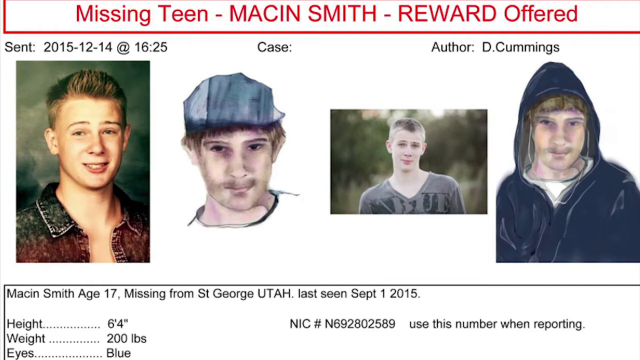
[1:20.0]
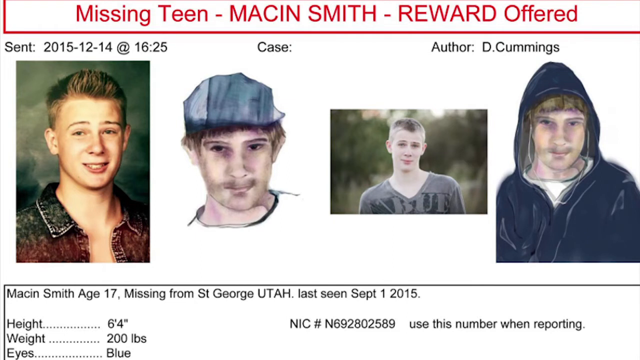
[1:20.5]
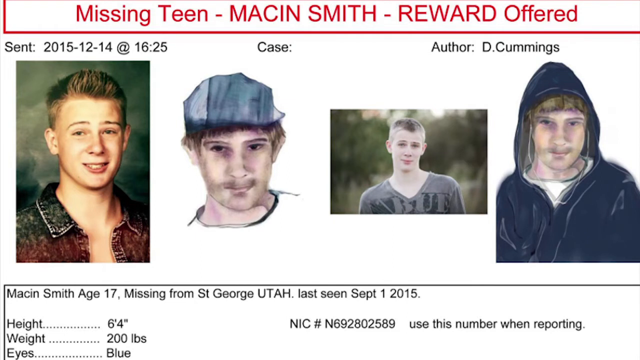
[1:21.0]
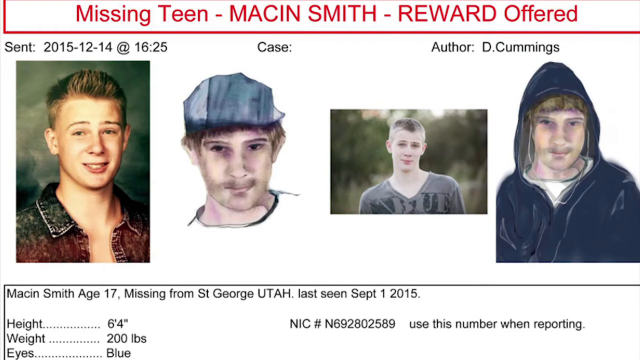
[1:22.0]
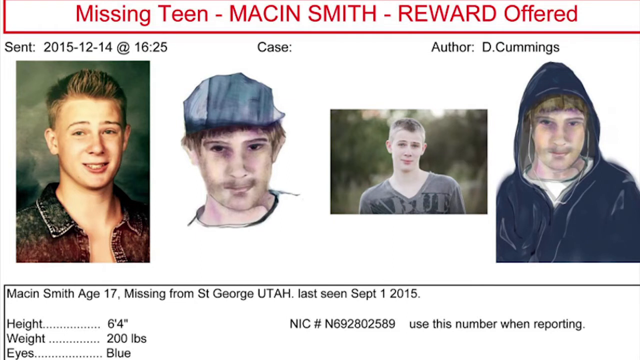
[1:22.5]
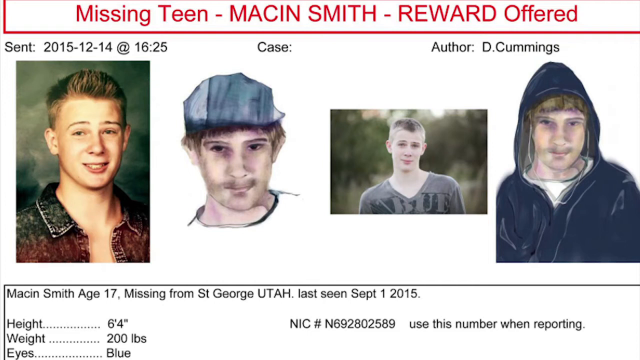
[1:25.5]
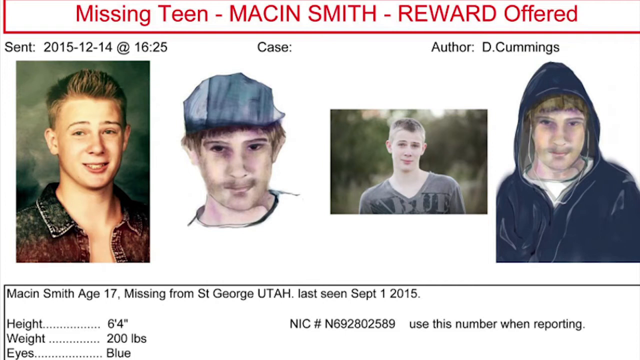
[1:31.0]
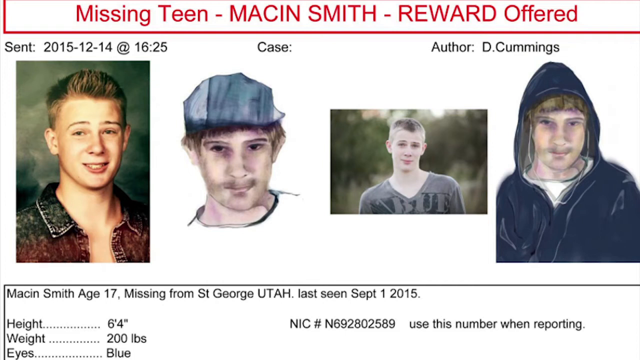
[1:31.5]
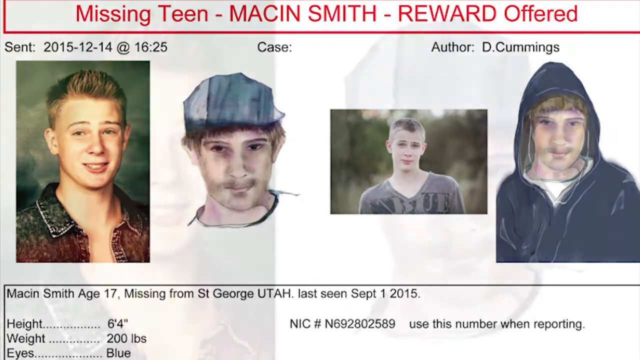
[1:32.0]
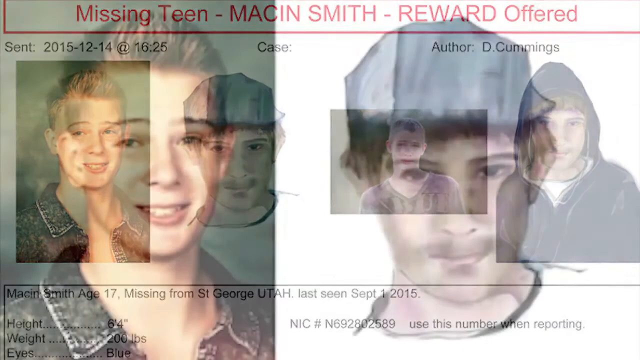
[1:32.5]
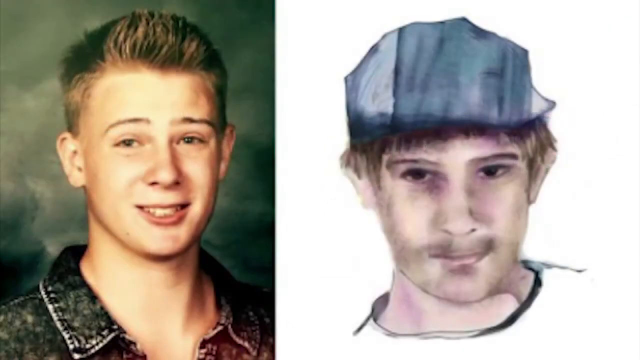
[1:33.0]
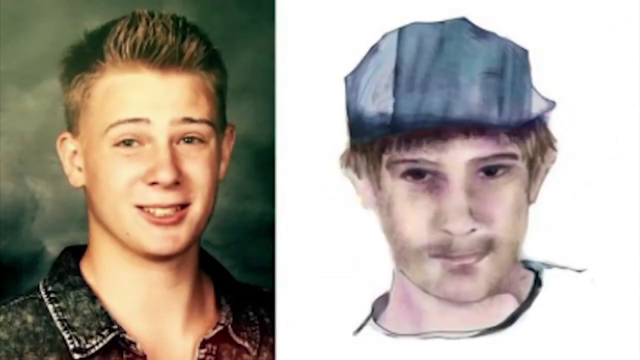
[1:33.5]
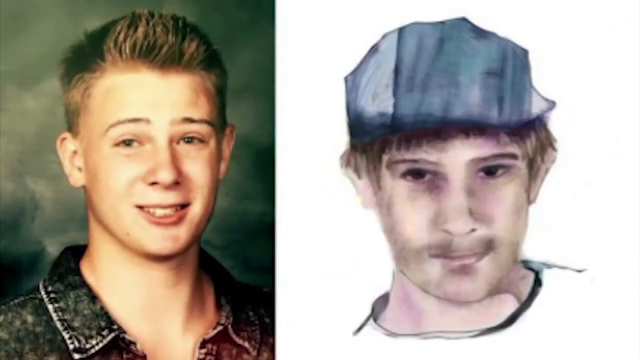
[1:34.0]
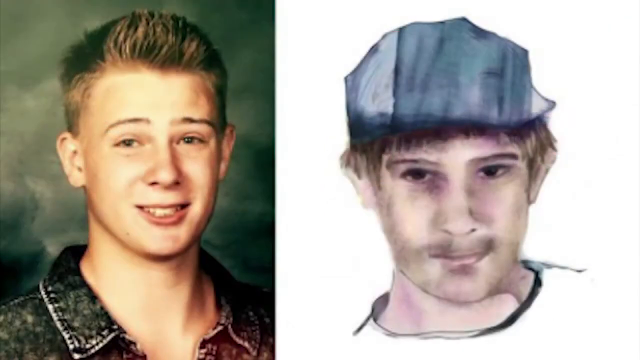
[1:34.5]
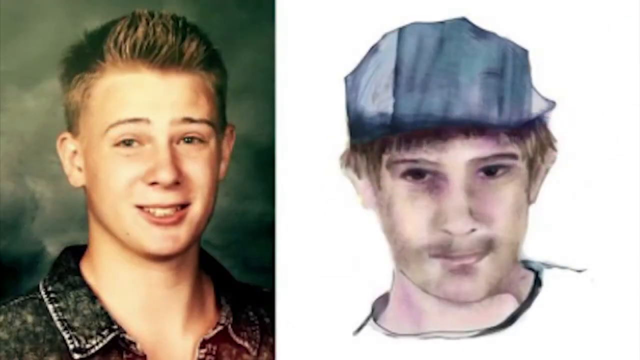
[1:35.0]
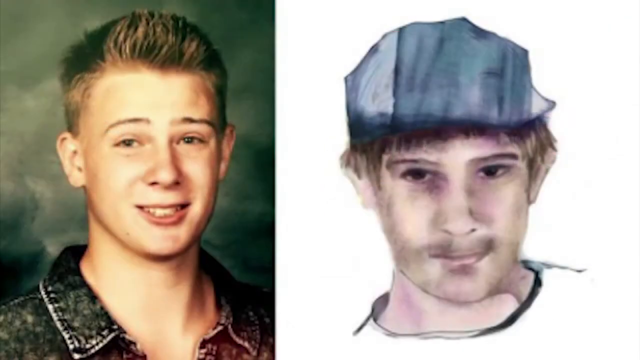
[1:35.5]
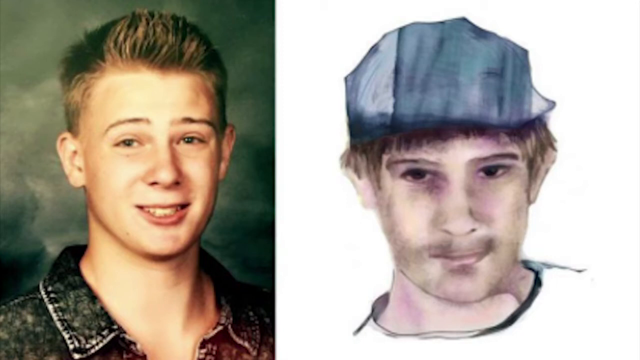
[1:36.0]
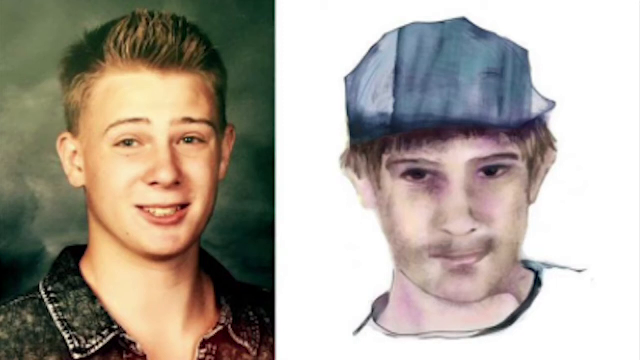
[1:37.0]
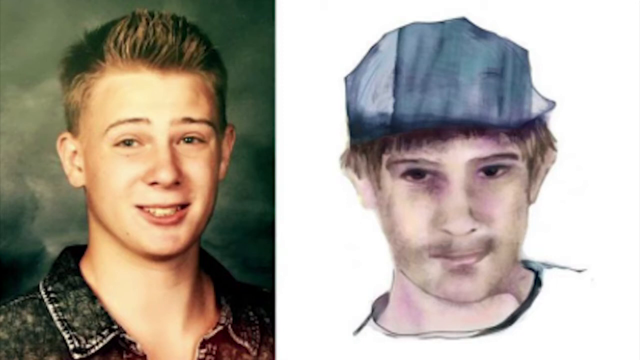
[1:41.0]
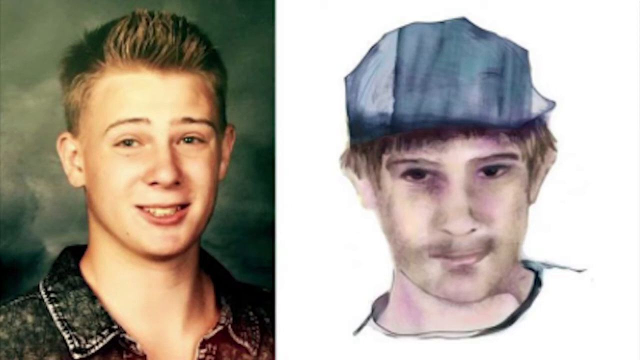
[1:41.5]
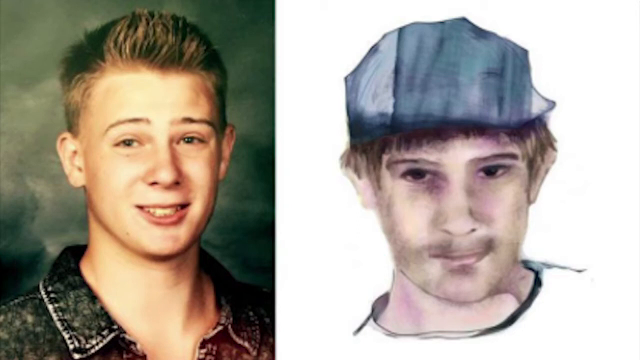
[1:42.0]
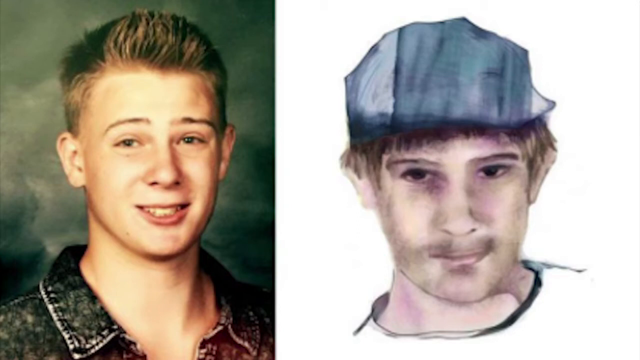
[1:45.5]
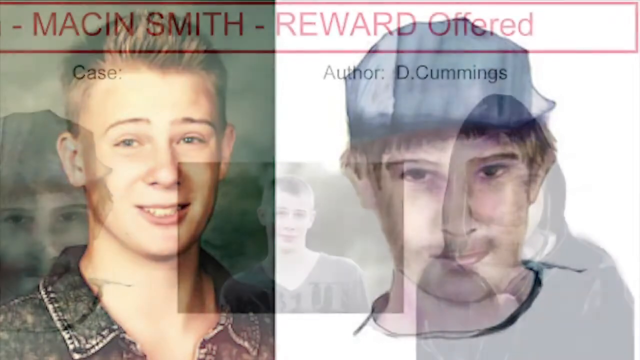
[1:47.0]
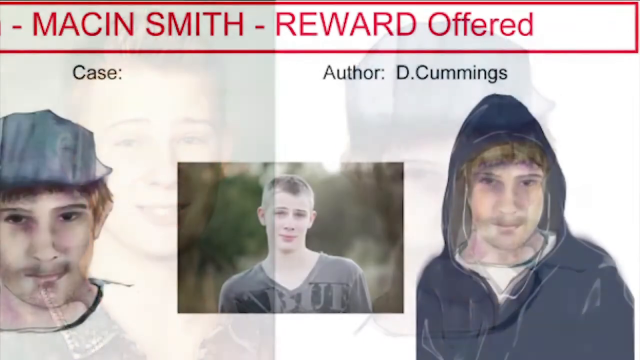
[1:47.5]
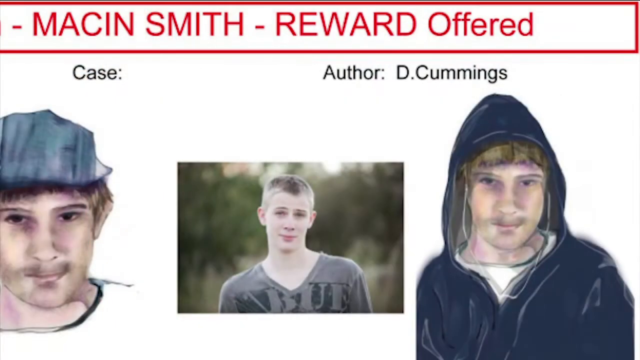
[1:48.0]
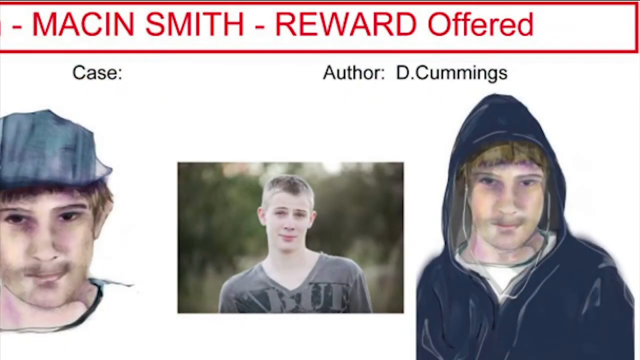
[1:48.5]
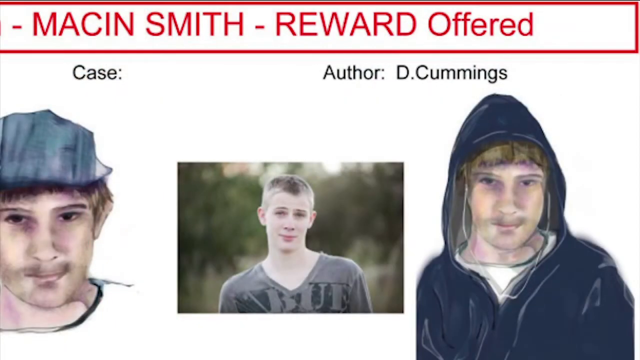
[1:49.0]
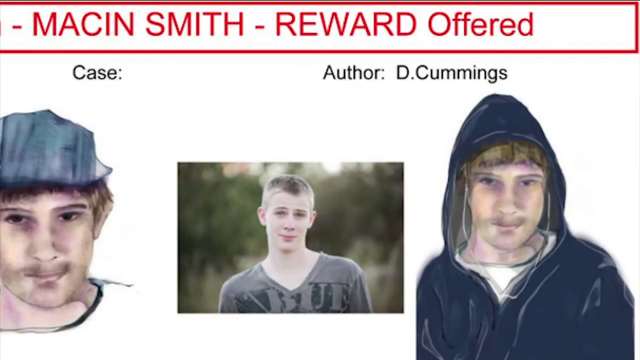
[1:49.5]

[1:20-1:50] The missing poster for Macin Smith, spelled M-A-C-I-N, is shown along with the reward being offered. It states he was last seen in St. George, Utah, on September 1, 2015, and the document is dated December 14, 2015. The video stays on the poster without change. It shows four pictures of the young man and then two pictures side by side: one showing him as a younger boy with blonde hair, and one showing how he may look with some stubble, apparently with a hat and looking a bit shady, on the right. These two pictures remain on screen without change.